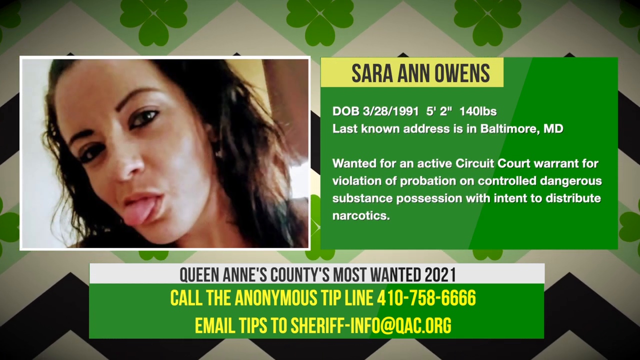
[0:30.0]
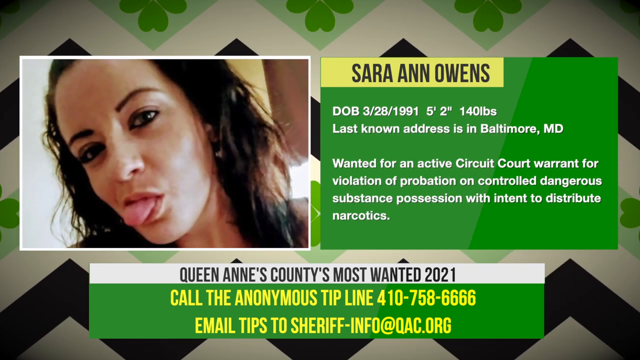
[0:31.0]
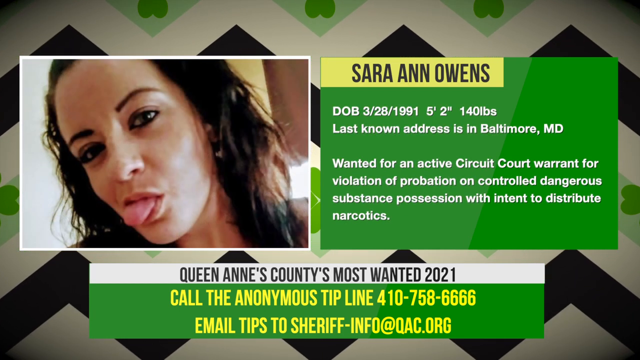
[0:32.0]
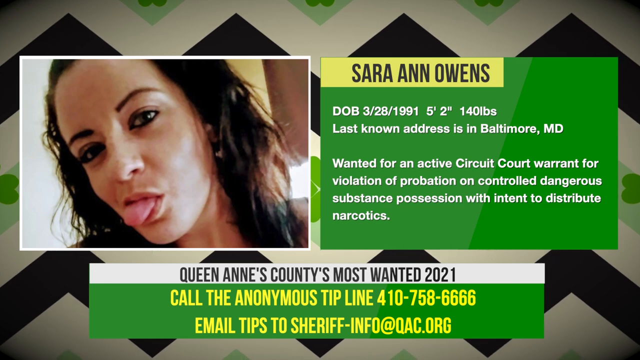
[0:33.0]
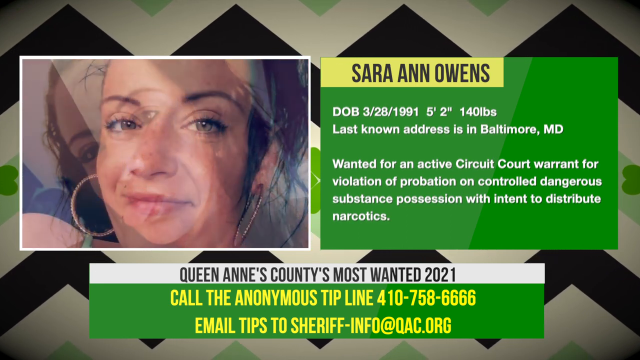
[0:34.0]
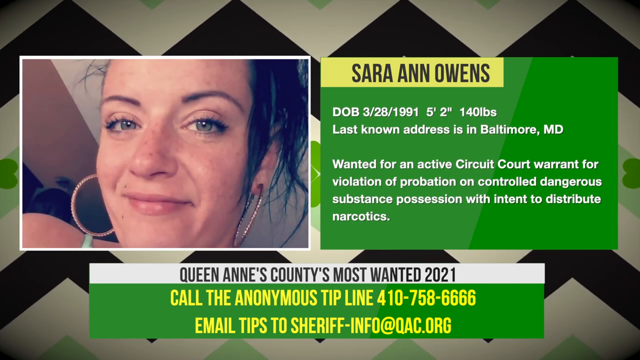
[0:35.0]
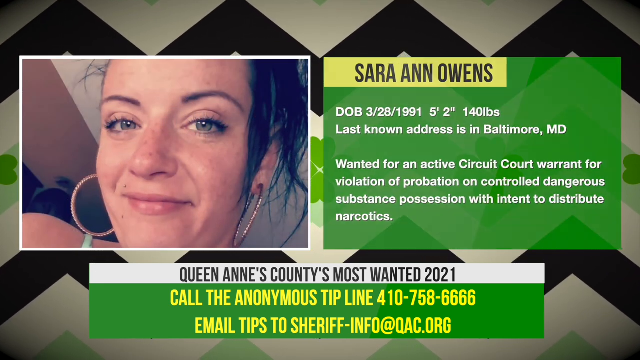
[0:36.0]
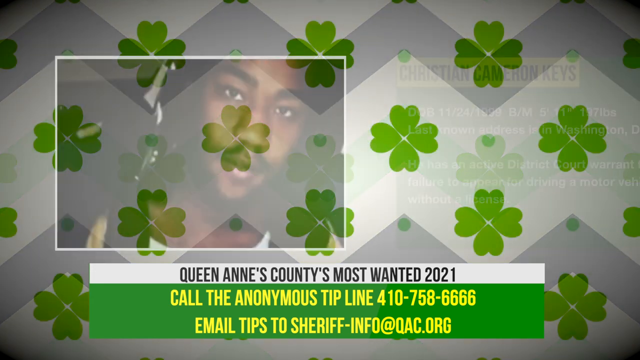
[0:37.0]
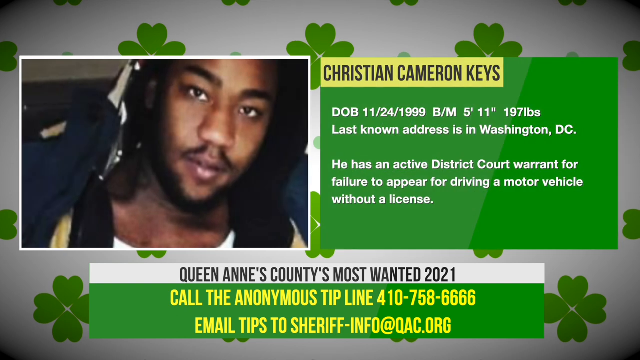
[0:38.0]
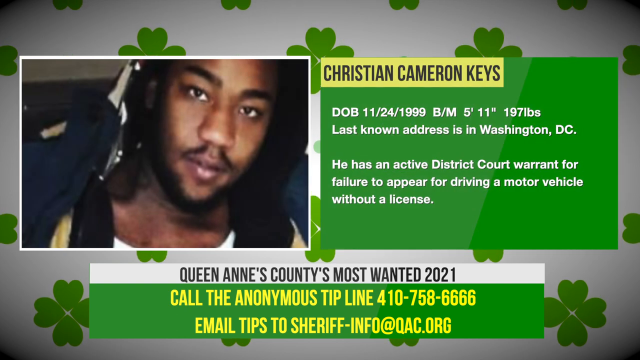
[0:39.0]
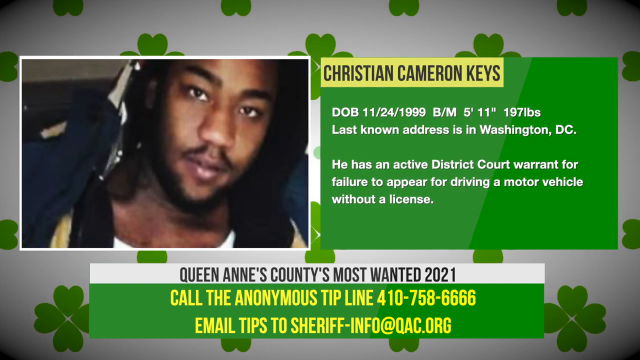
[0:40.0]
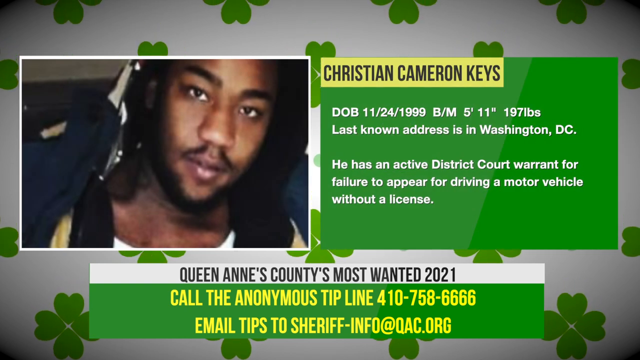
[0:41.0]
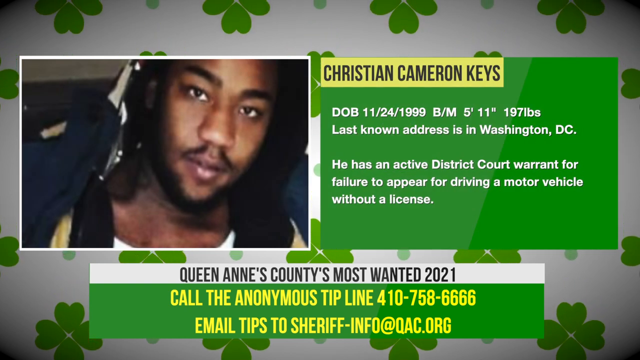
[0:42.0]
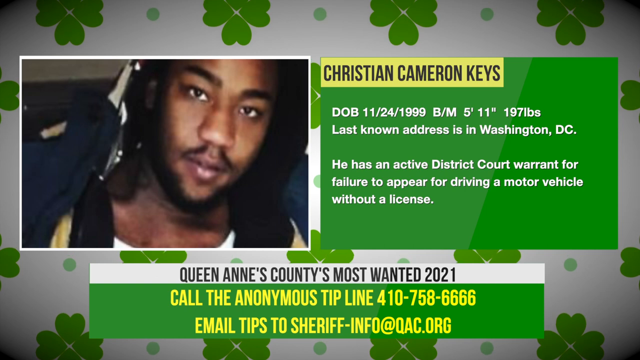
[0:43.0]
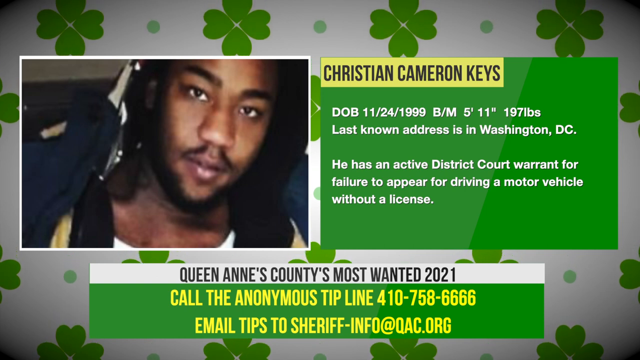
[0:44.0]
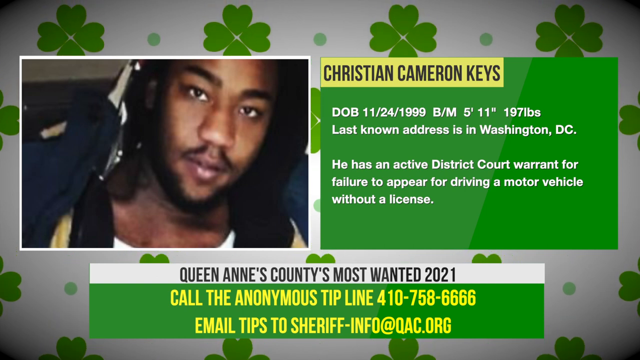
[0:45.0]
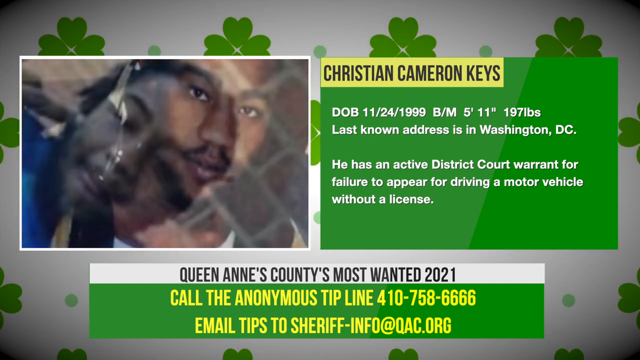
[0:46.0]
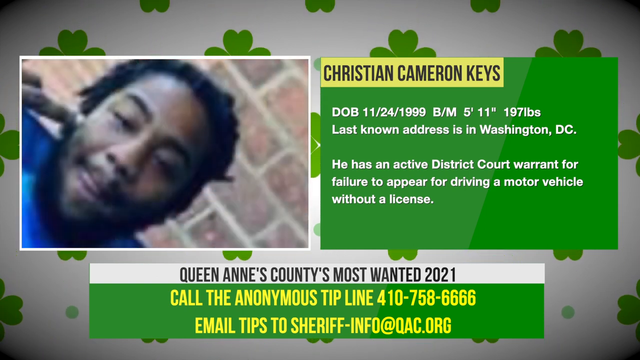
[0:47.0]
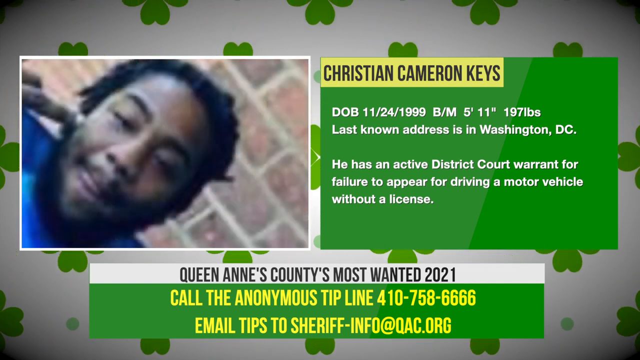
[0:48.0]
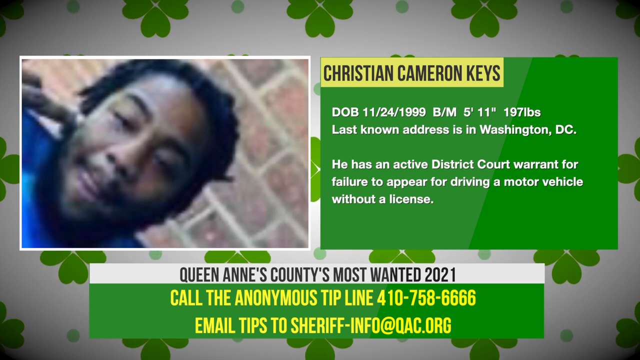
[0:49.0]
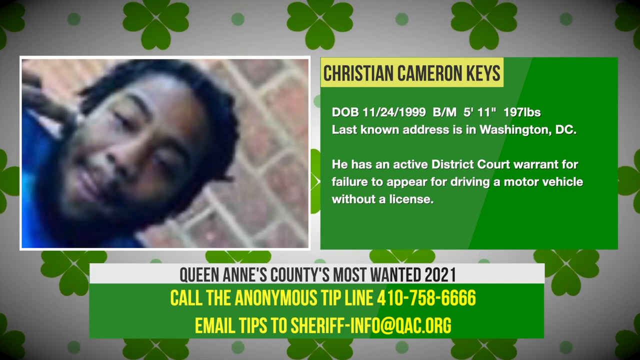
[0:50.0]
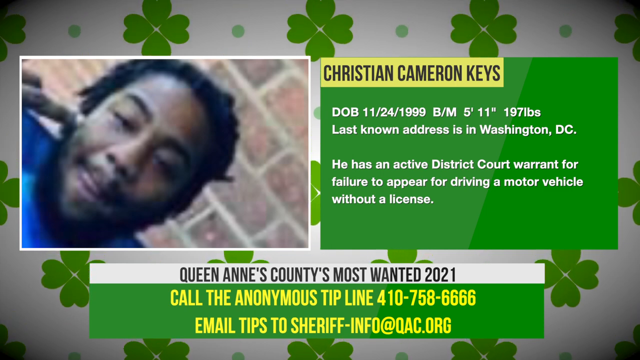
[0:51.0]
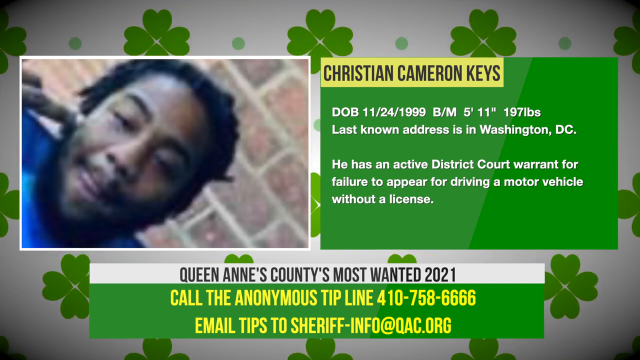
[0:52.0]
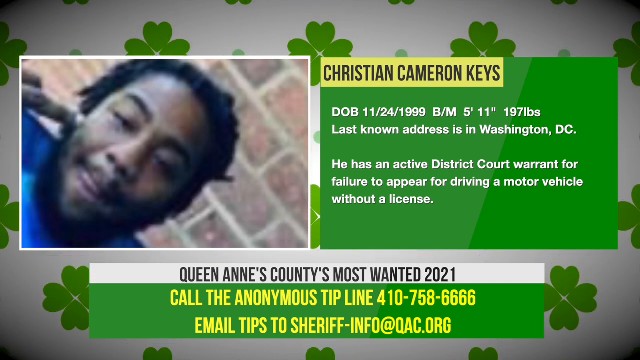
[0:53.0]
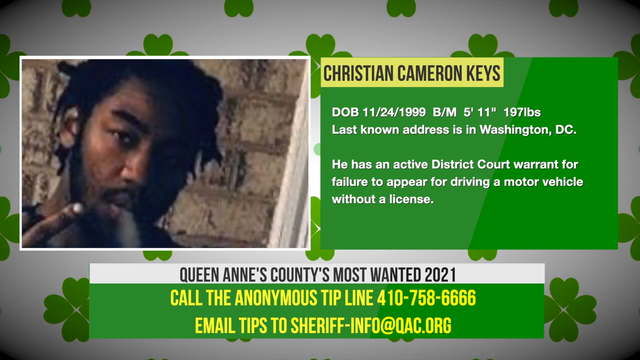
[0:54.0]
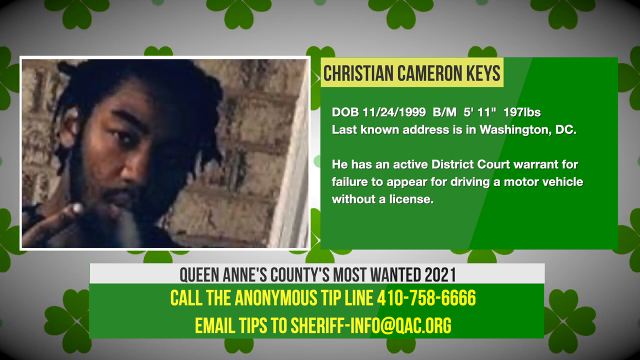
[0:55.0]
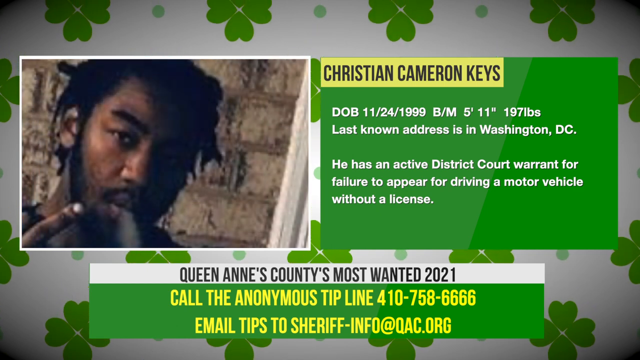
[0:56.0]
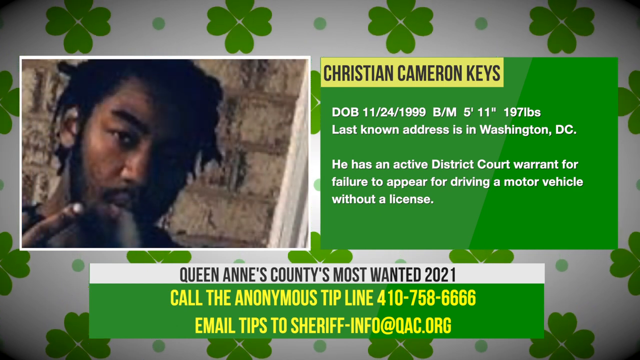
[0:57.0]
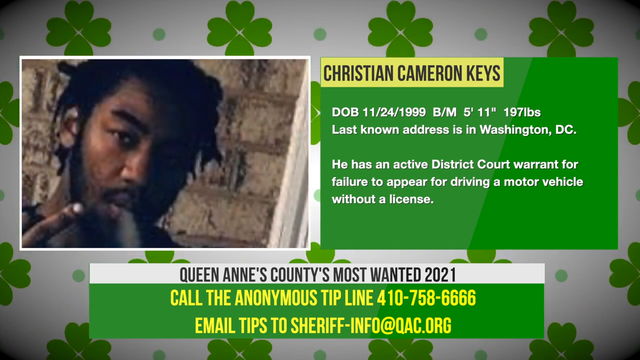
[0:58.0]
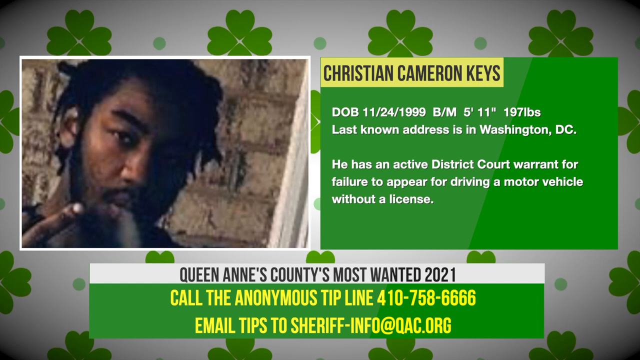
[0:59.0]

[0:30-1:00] Three rectangular windows are on screen, two in the central part of the frame and the third in the lower part. The rectangle at the far left shows photos of a woman, while the other two contain lines of text in different colours: the window on the right has white text on a green background and black text on a yellow background, and the rectangle at the bottom has yellow text on a green background and black text on a white background. Two rectangular windows then appear in the center of the frame. The window on the left side contains three photos of a boy, and the other two rectangles again contain lines of text.